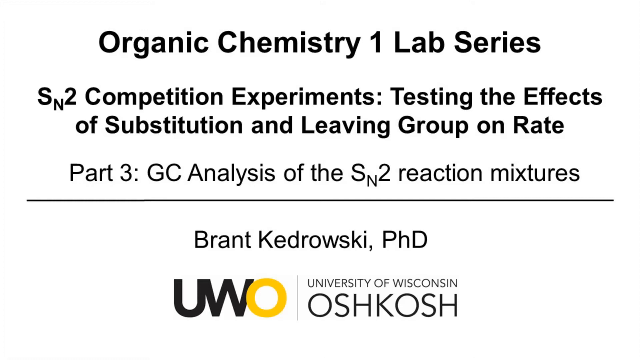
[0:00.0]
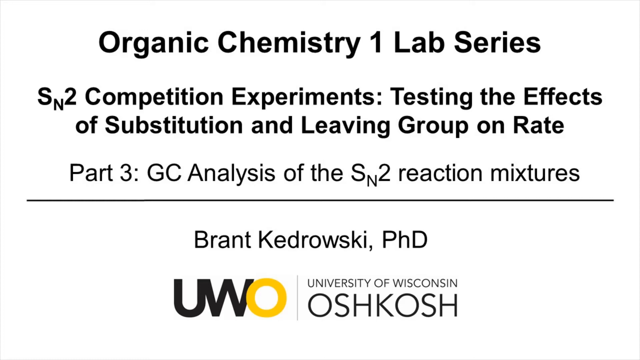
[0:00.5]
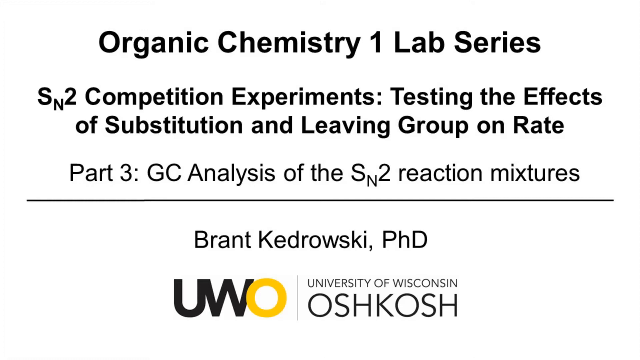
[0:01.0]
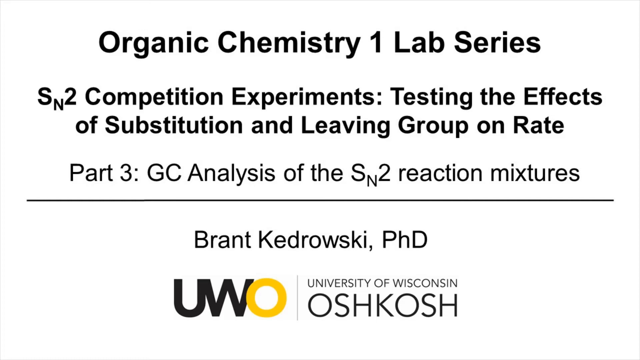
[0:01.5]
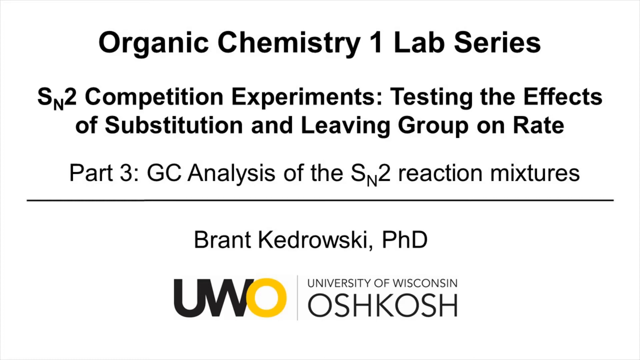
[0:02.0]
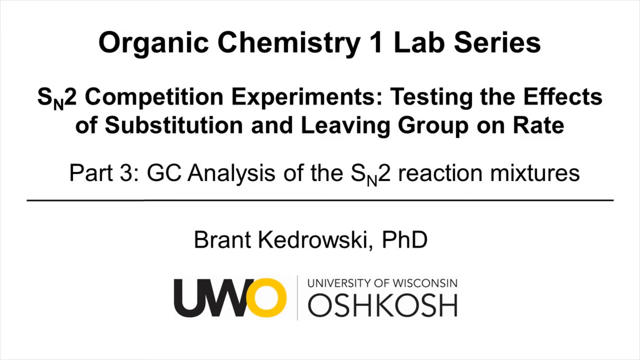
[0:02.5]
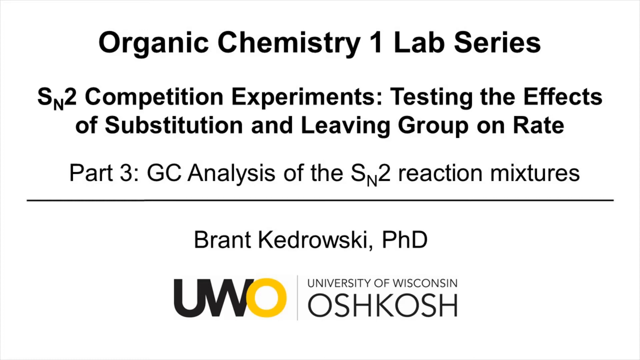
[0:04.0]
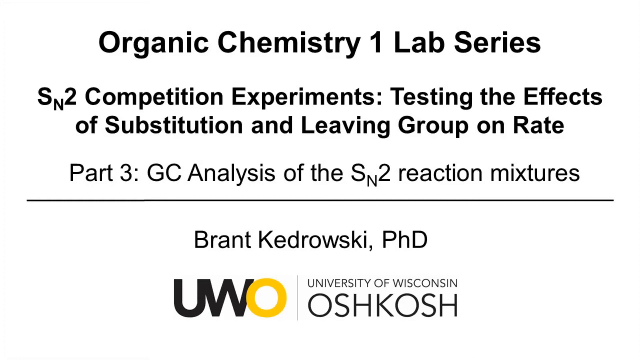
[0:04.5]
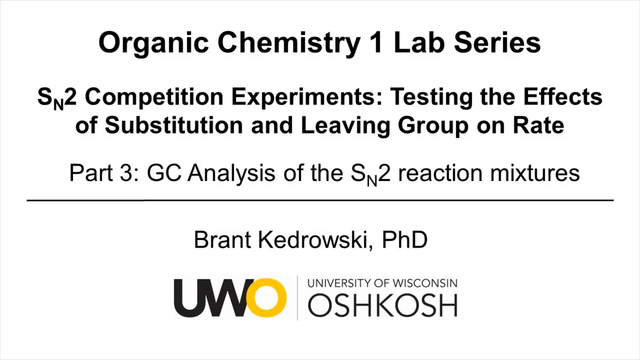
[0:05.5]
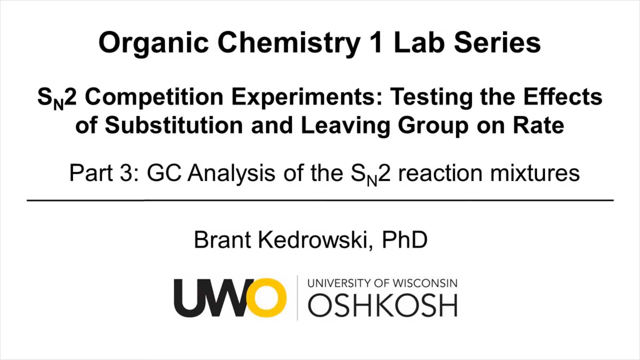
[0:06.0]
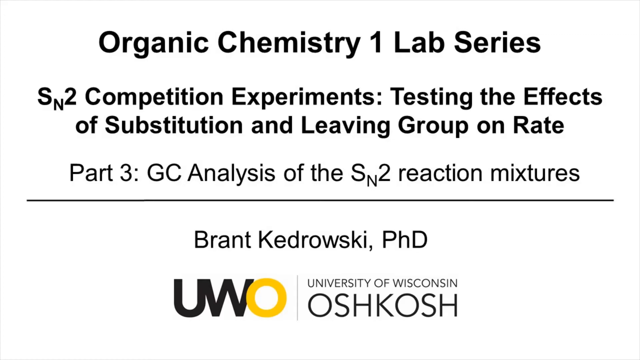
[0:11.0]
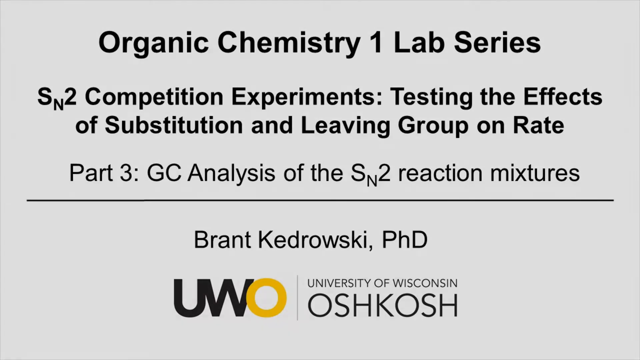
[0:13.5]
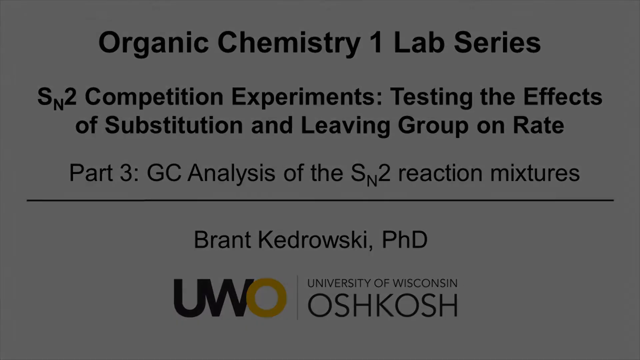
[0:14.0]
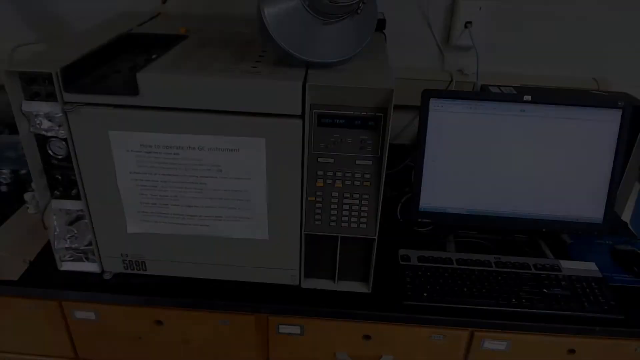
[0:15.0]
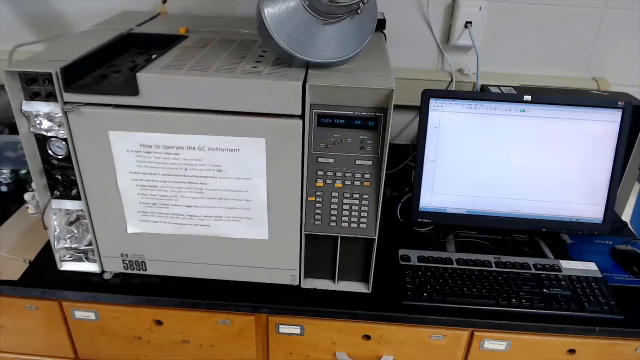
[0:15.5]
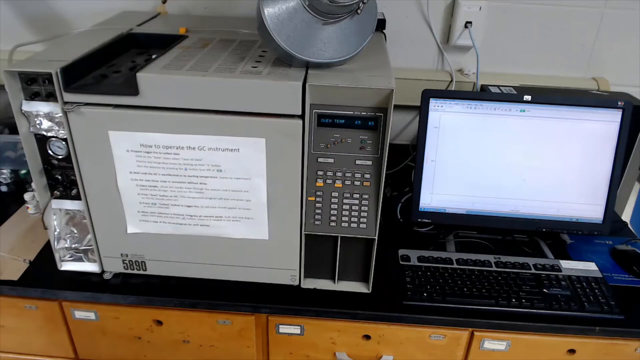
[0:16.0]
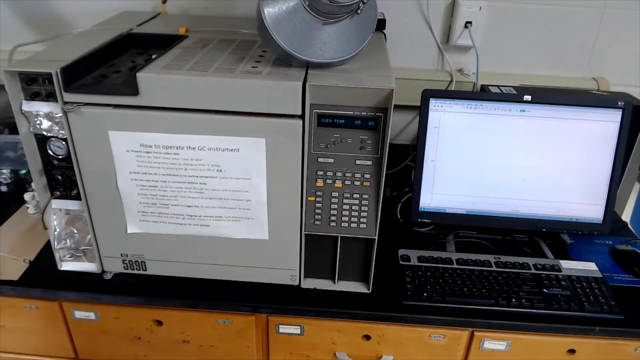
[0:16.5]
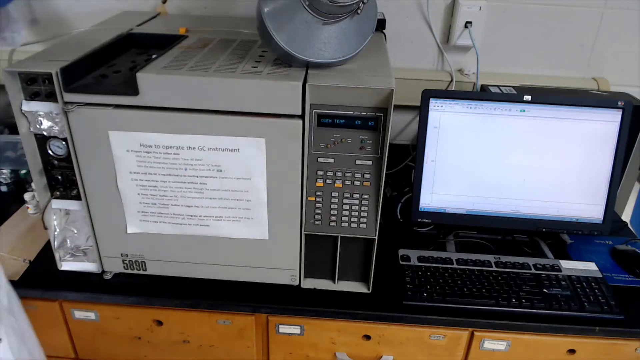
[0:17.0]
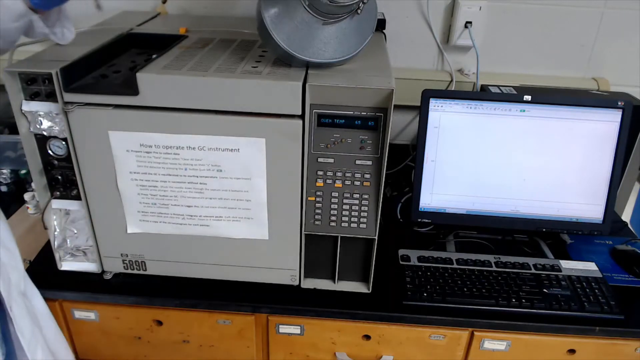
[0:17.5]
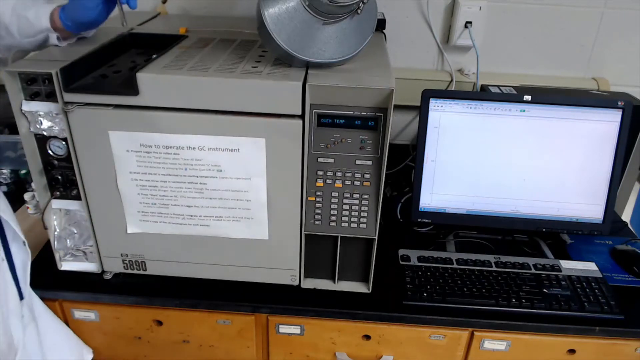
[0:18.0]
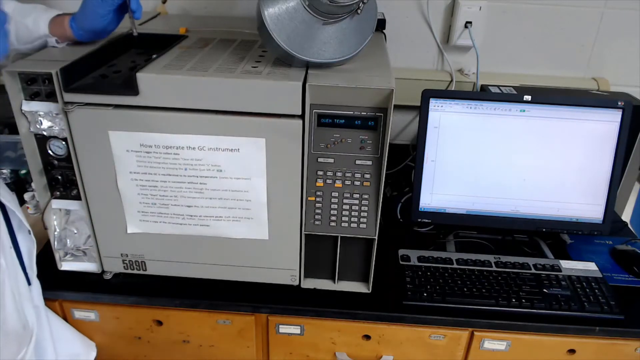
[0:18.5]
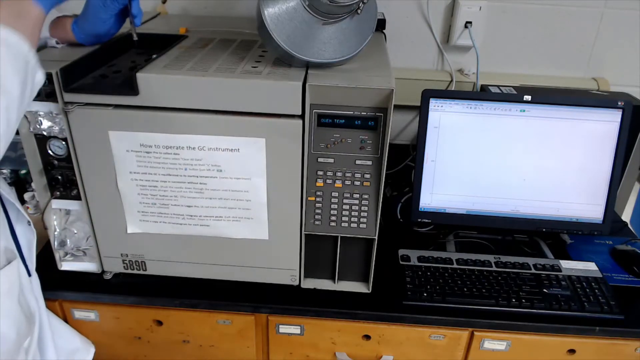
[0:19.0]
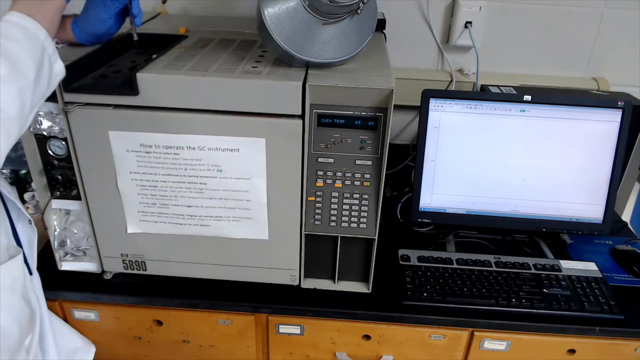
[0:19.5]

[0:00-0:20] On-screen text reads "Organic chemistry one lab series SN2 competition experiment testing effects of substitution and leaving group", and the name Brent Kendricks along with University of Wisconsin appears in the video. A man wearing a white jacket and blue gloves is on screen, with a black top next to him and a long machine next to him. Only half of his body is visible in the frame. He is busy mixing colors and testing the mixtures.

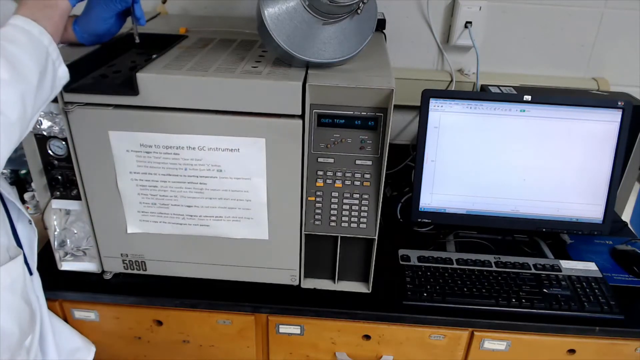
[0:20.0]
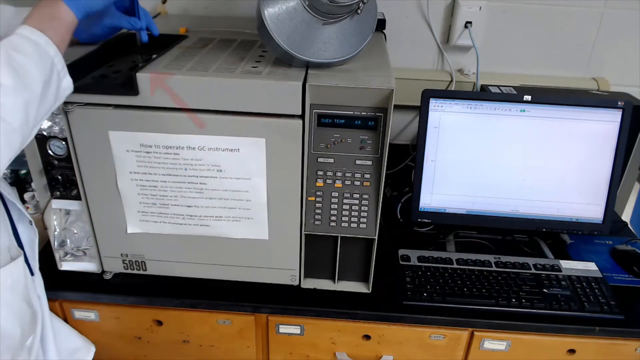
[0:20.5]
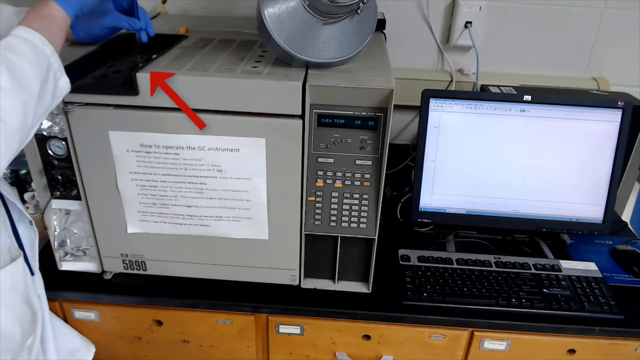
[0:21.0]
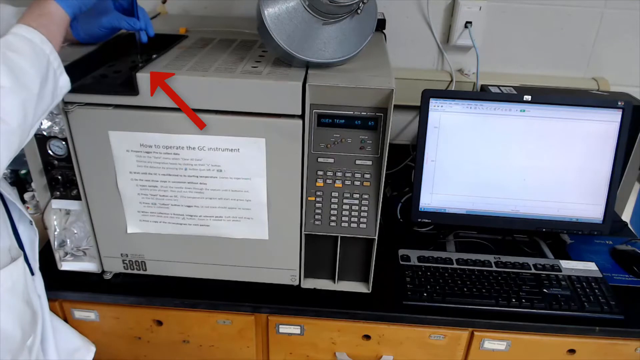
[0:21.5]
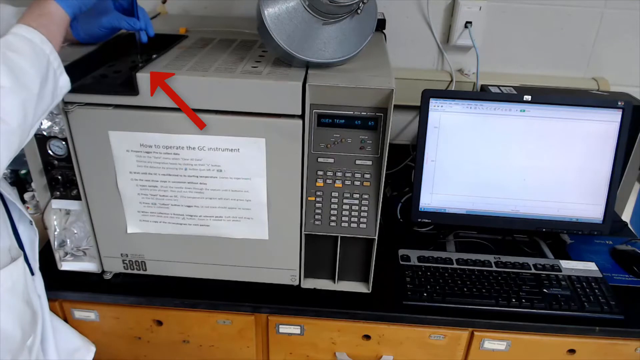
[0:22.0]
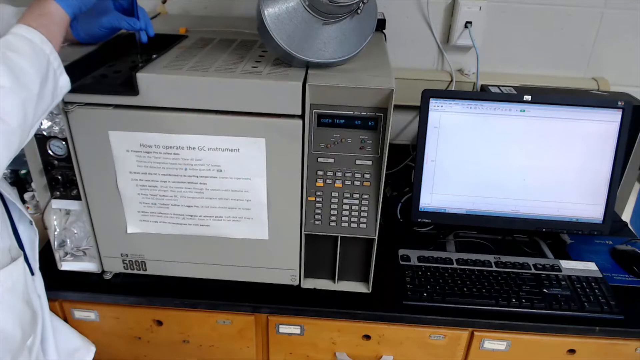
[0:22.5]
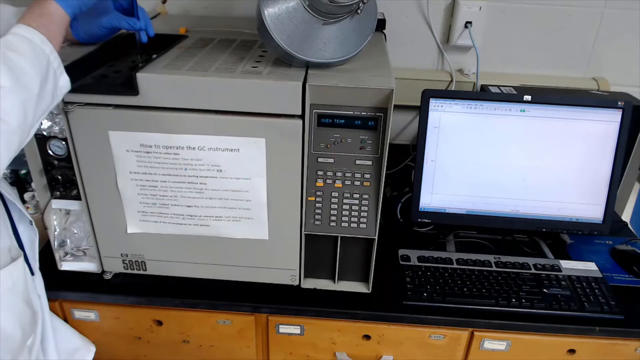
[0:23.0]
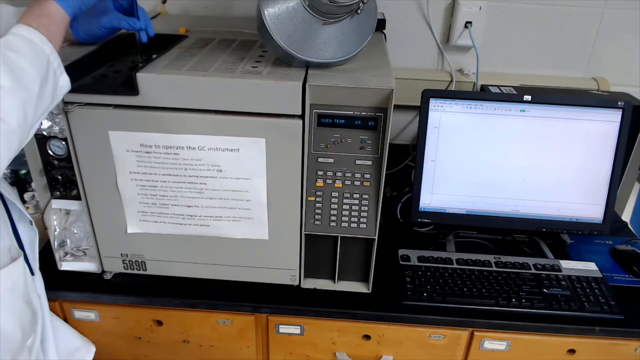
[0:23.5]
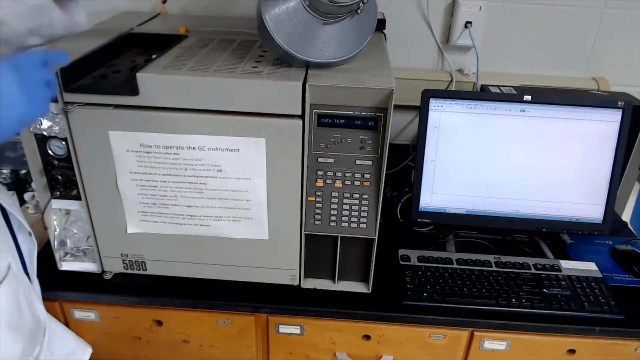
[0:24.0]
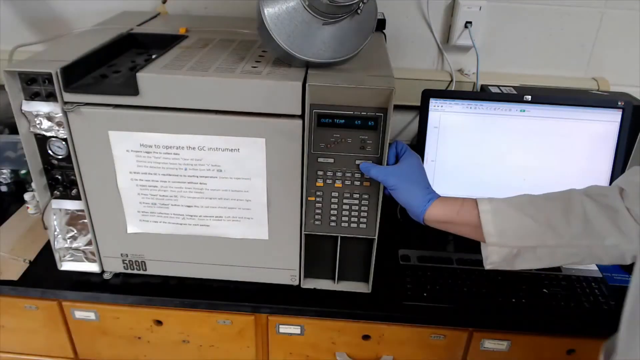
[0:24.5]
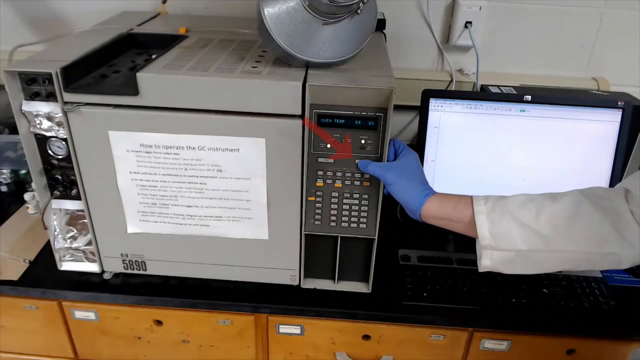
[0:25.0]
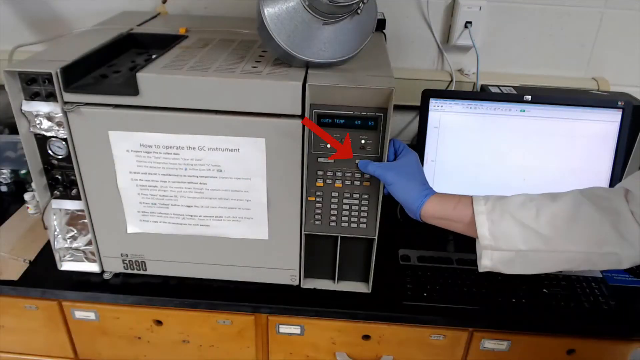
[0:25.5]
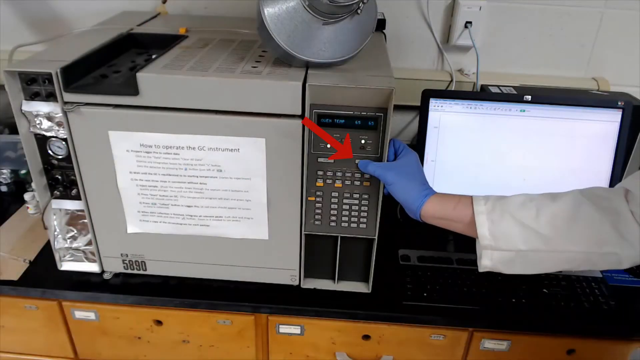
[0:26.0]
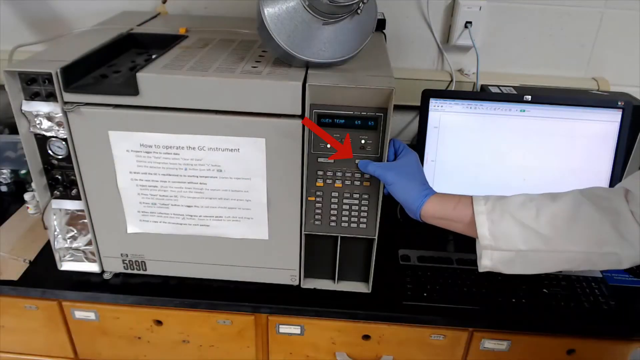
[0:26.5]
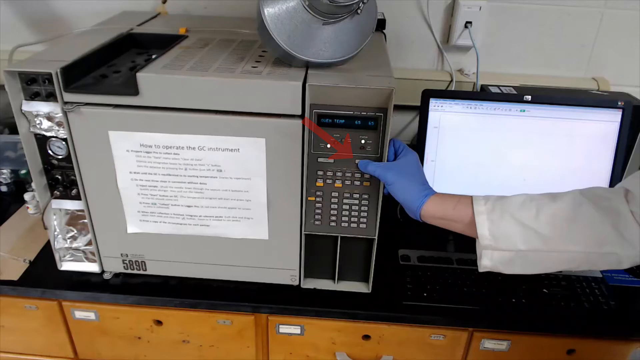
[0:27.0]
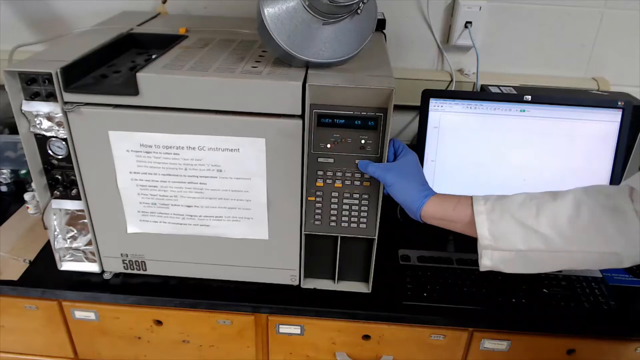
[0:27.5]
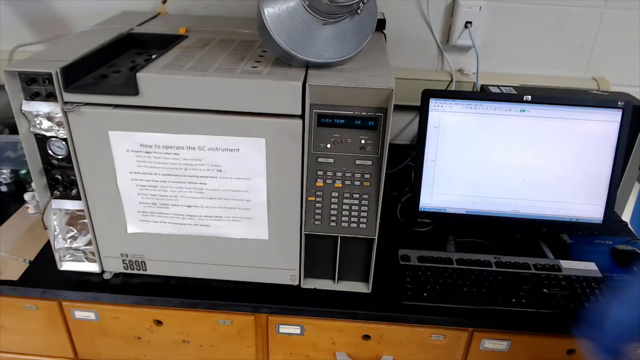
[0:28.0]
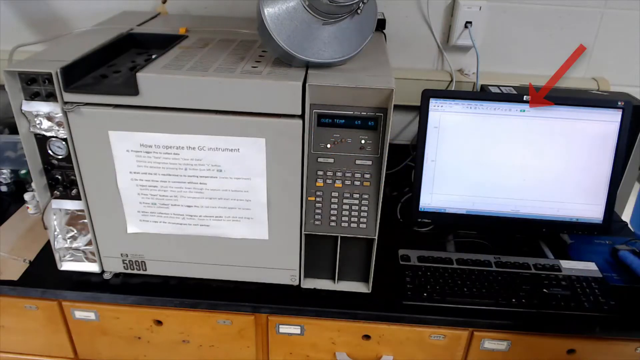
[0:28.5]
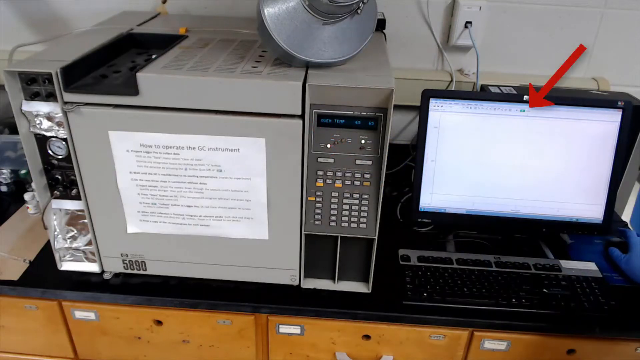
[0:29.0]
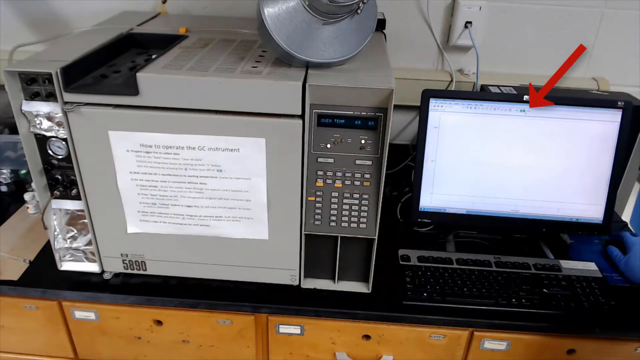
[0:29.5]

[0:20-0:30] The laptop and the mixer appear, and a hand in a white jacket sleeve and a white and blue glove is shown operating the machine. The person seems to be demonstrating how the machine is operated.